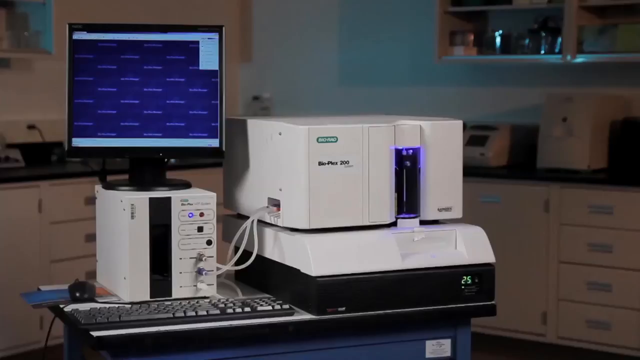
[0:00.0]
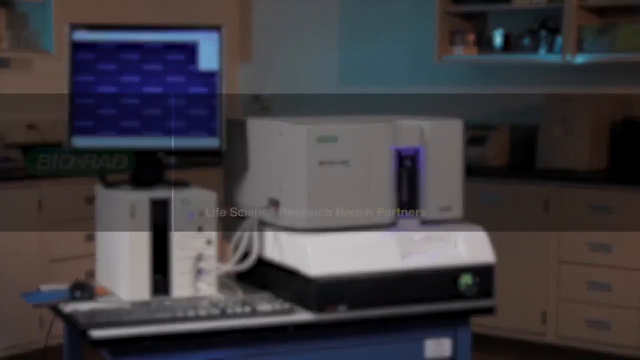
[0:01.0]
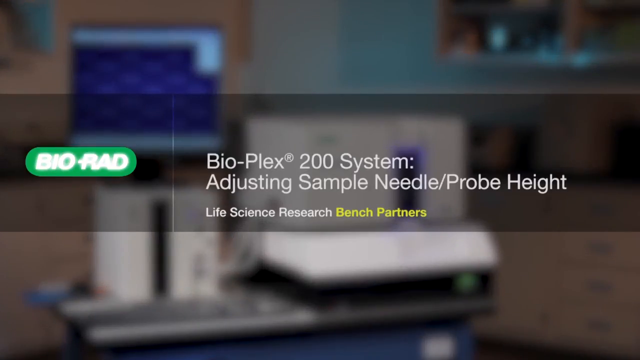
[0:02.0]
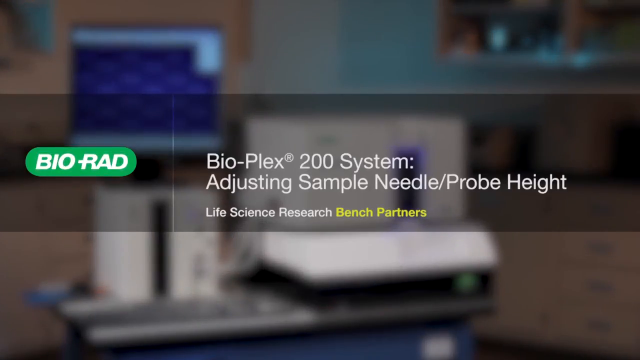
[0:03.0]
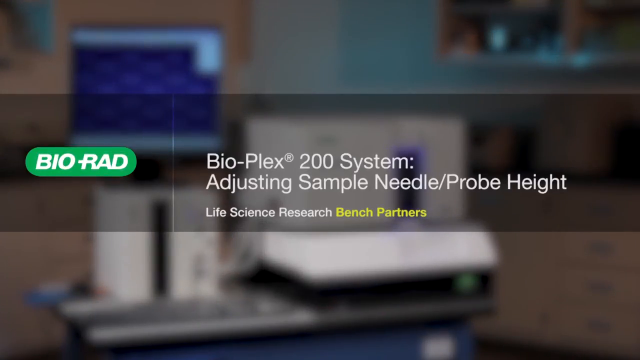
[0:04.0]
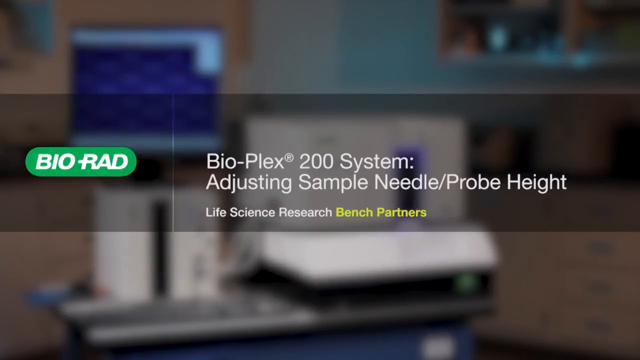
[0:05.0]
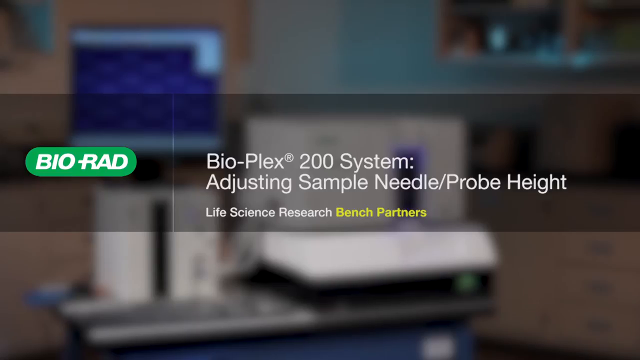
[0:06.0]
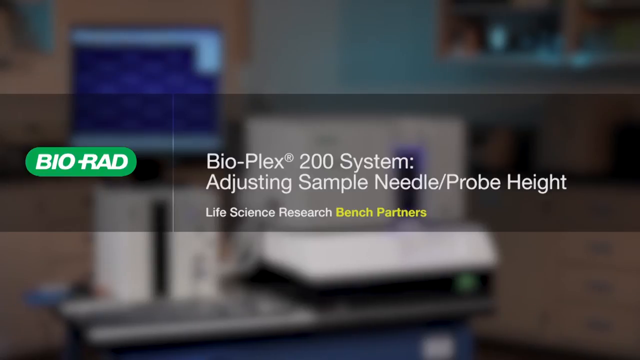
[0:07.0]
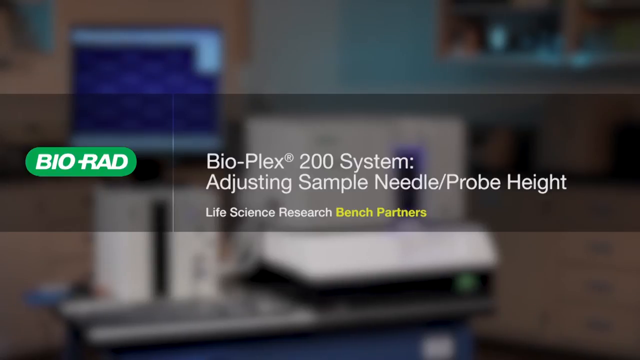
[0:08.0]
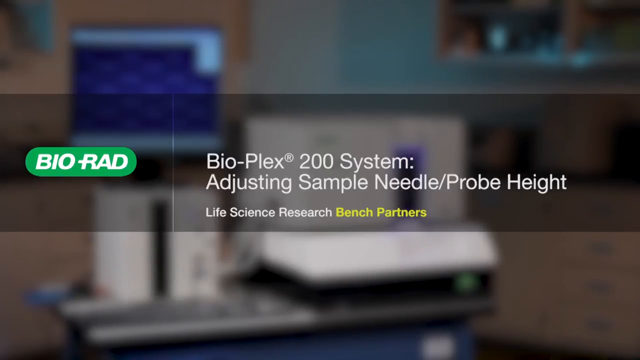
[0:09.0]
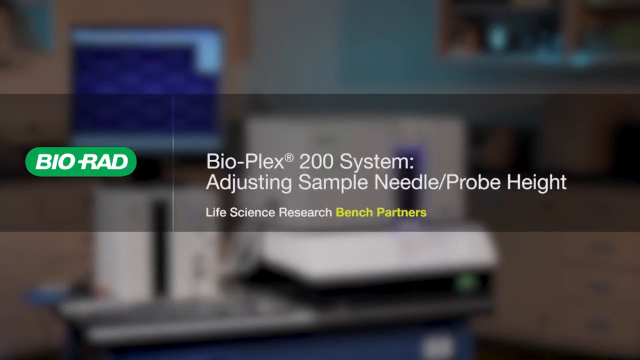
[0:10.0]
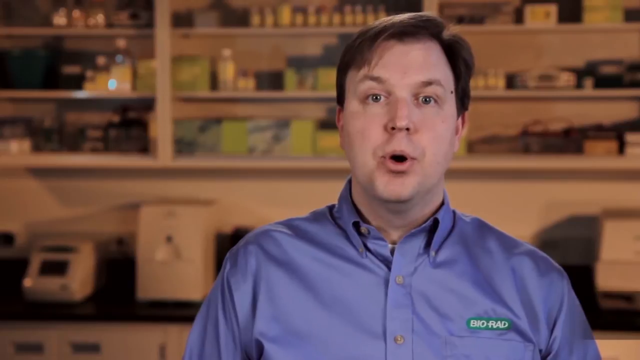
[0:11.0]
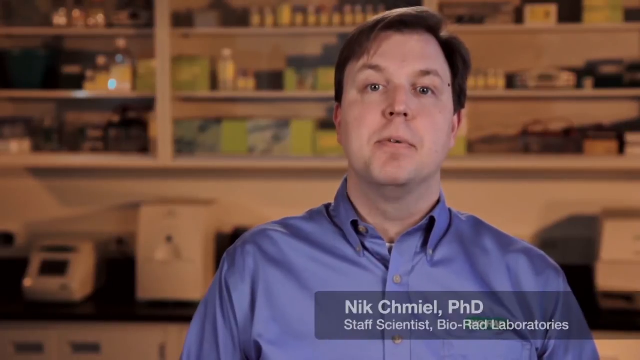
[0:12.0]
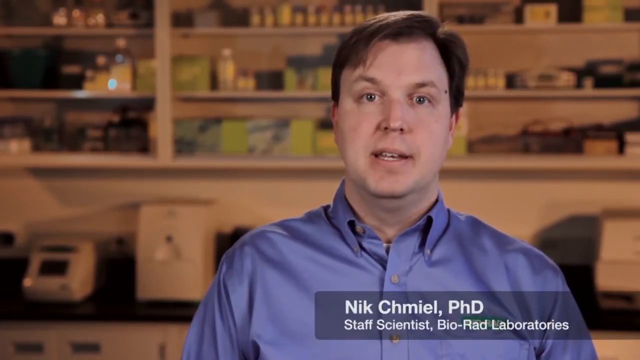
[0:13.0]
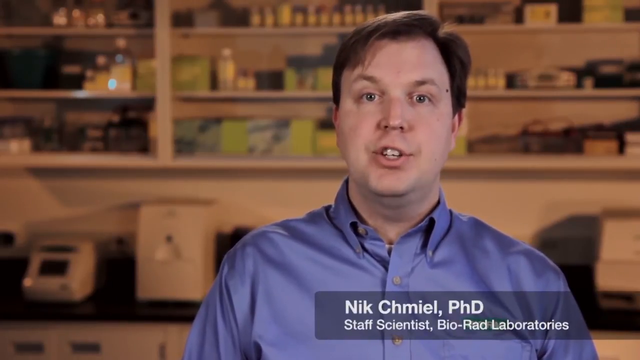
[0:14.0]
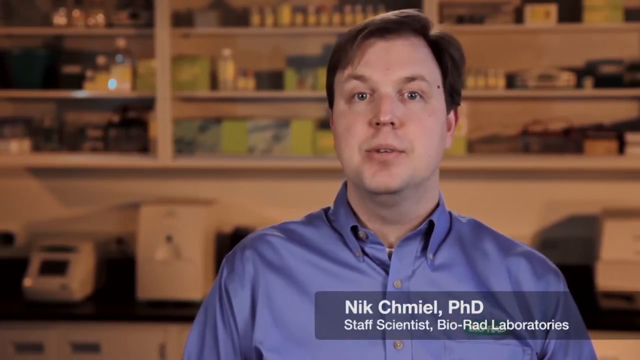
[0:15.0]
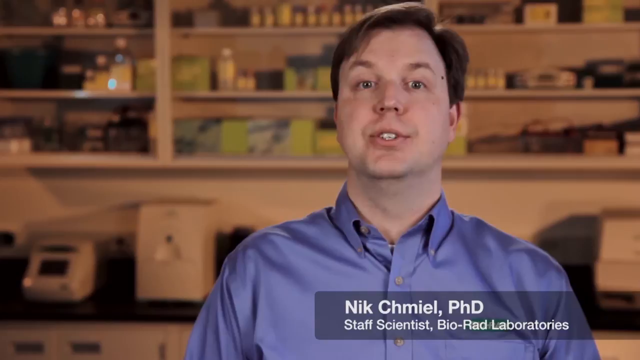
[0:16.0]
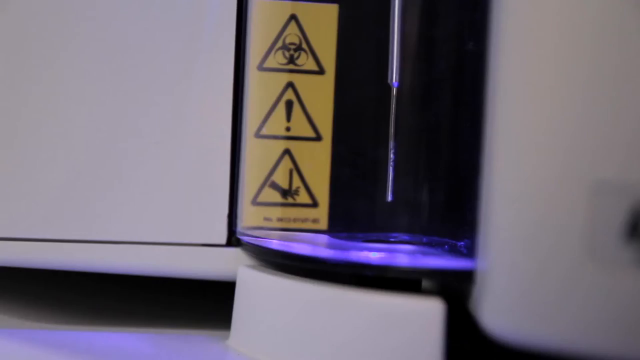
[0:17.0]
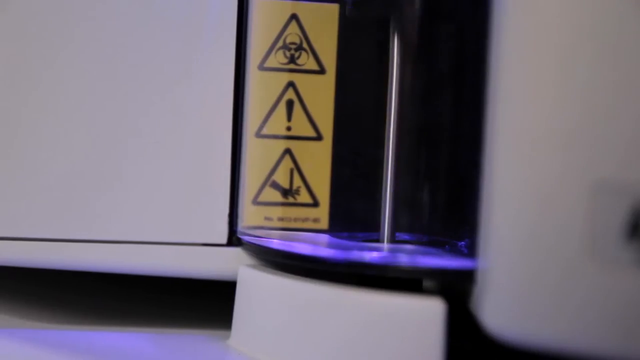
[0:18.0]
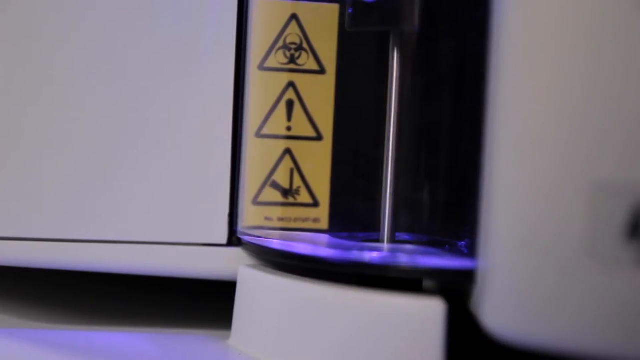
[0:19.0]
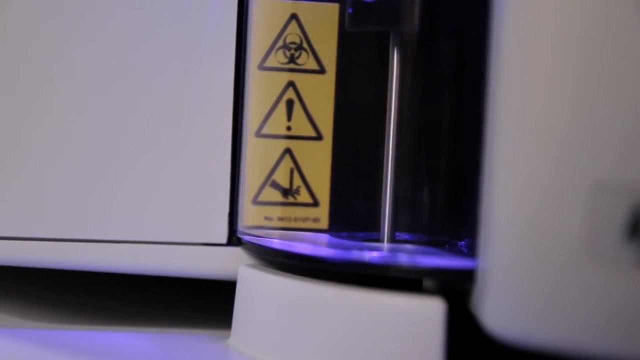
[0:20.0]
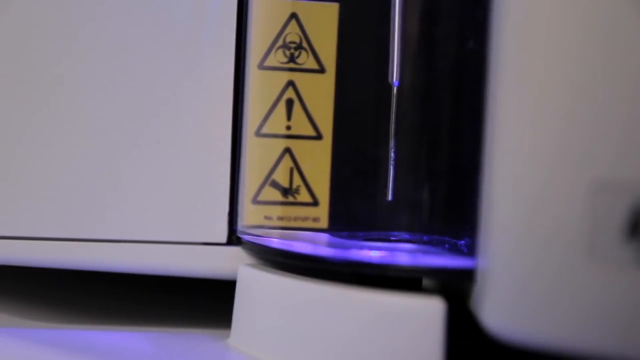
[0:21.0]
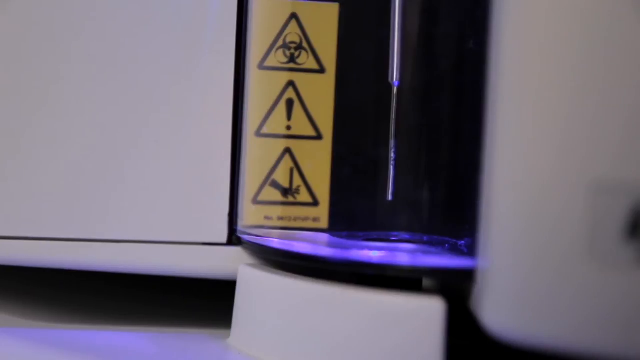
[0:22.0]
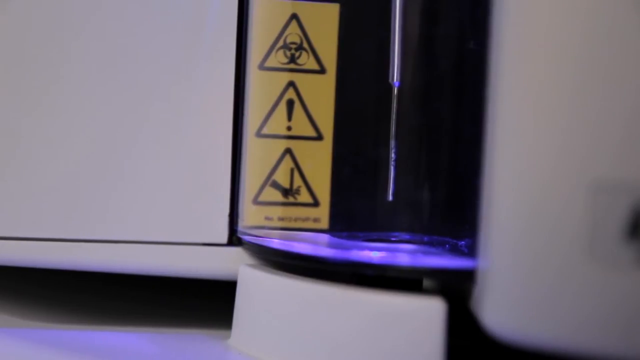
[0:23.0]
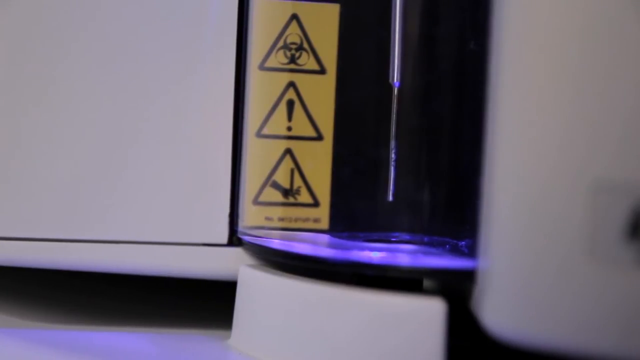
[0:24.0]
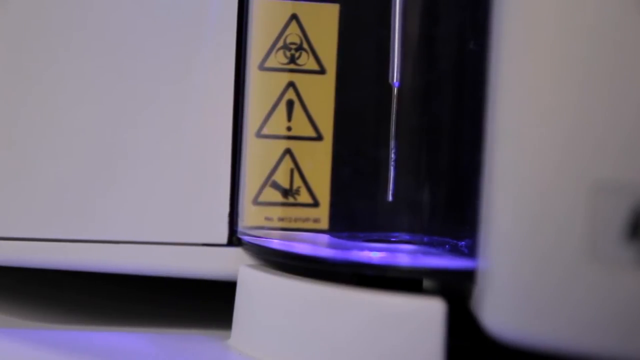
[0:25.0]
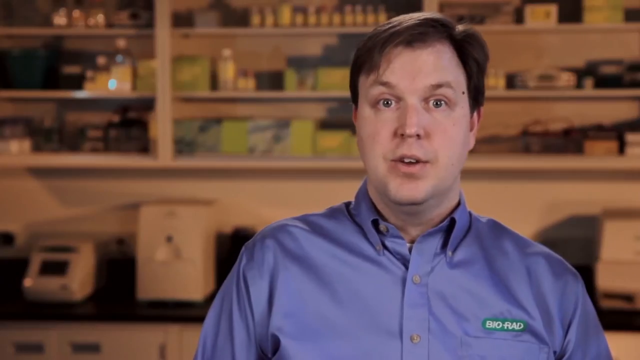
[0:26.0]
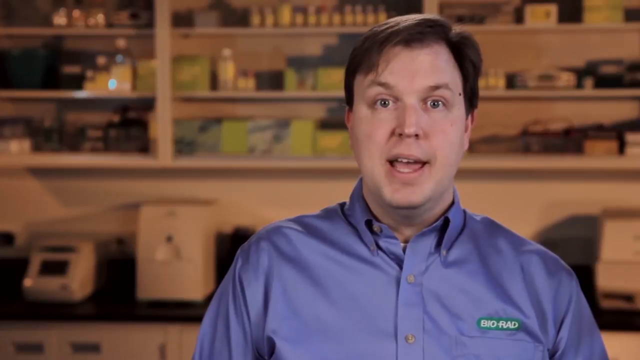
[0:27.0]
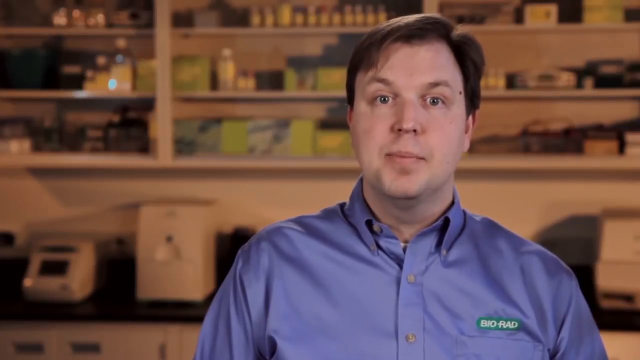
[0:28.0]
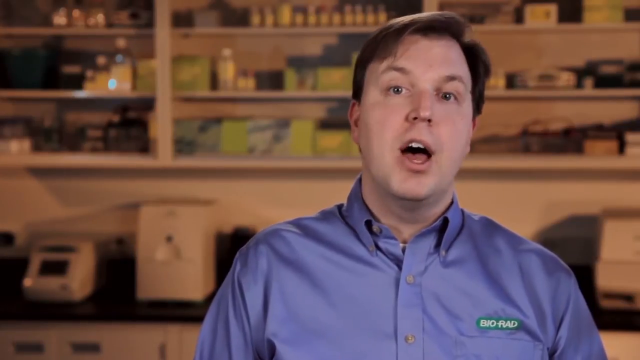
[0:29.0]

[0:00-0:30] A black monitor is on top of a white computer in a medical room or office. To the right of the black monitor is a white computer or machine, and beneath the monitor and computer is a keyboard. Two transparent textboxes merge from the left and right sides of the frame into one textbox. On its left side is a green BIO RAD logo; on its right side, grey text reads "Bio-Plex 200 System: Adjusting Sample Needle/Probe Height." Beneath that, smaller white text reads "Life Science Research," and to the right of that, smaller yellow text reads "Bench Partners." The video fades to a man standing in a medical room or office with shelves full of medical supplies behind him. He is Caucasian, has brown hair and wears a blue collared shirt. He faces the viewer and begins to speak as a transparent textbox appears in the lower right corner, reading "Nik Chmiel, Phd" in white text, with "Staff Scientist, Bio-Rad Laboratories" in white text beneath it. The video fades to a close-up of a white machine with a yellow hazmat label on its left side. A metallic needle inserts itself into a hole illuminated by a purple surface in the white machine, then retracts back up. The video fades back to Nik Chmiel speaking to the camera in the medical office or lab.